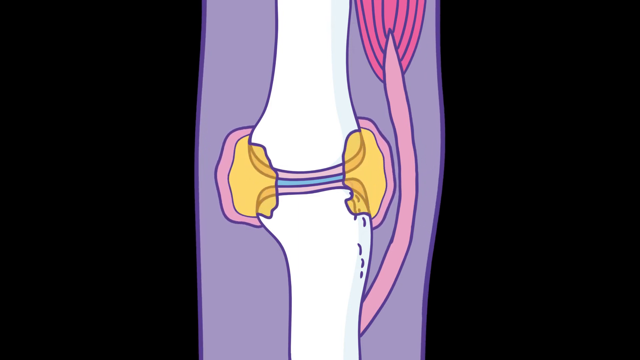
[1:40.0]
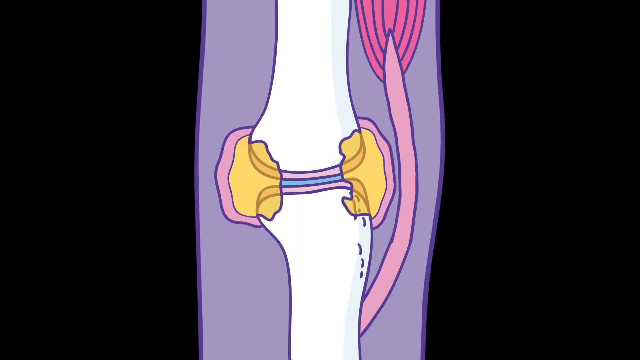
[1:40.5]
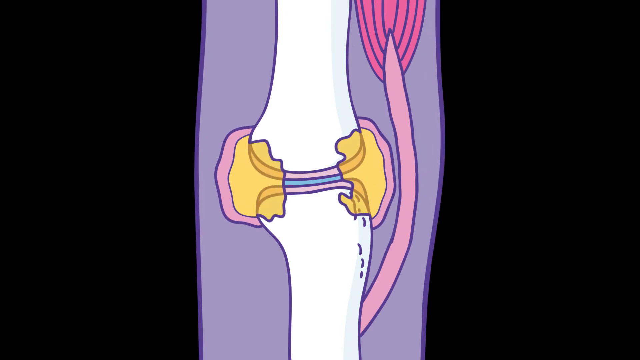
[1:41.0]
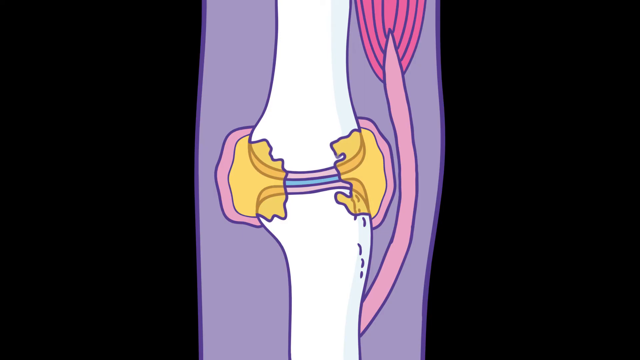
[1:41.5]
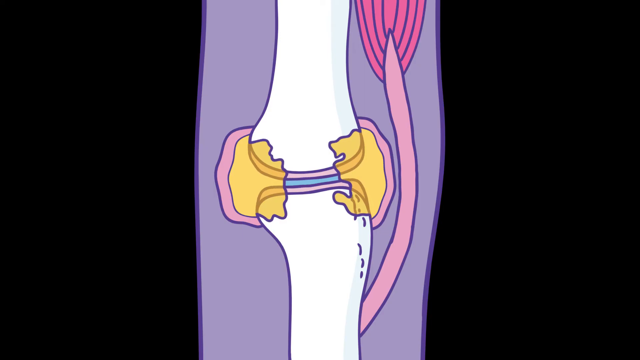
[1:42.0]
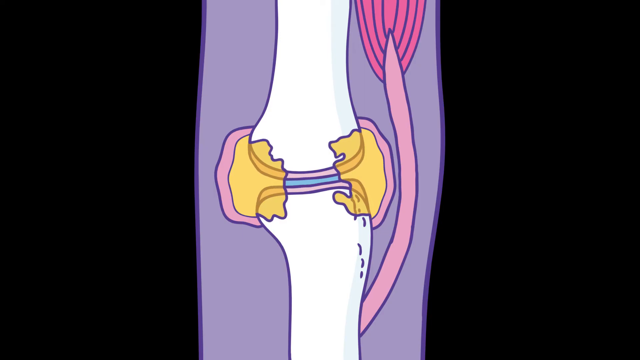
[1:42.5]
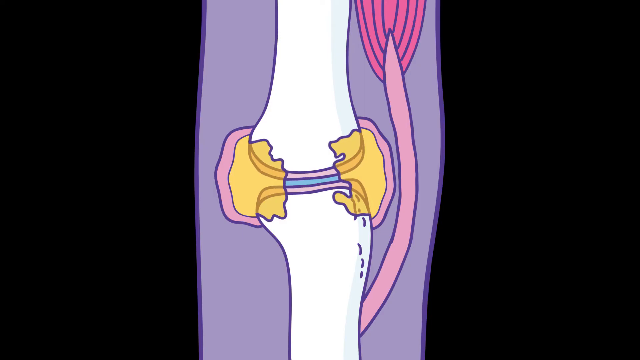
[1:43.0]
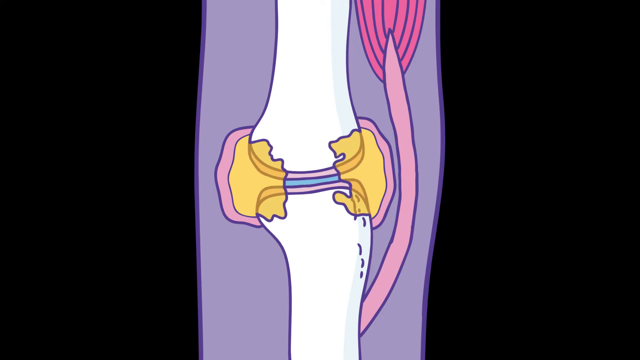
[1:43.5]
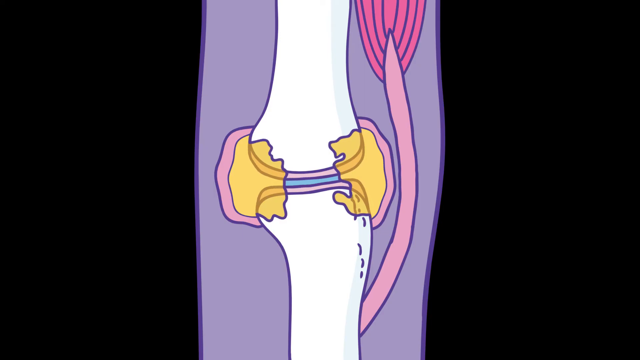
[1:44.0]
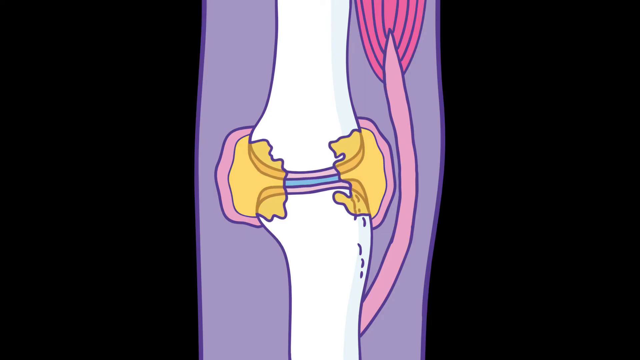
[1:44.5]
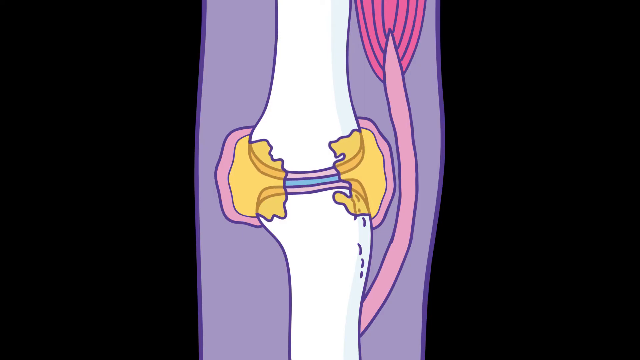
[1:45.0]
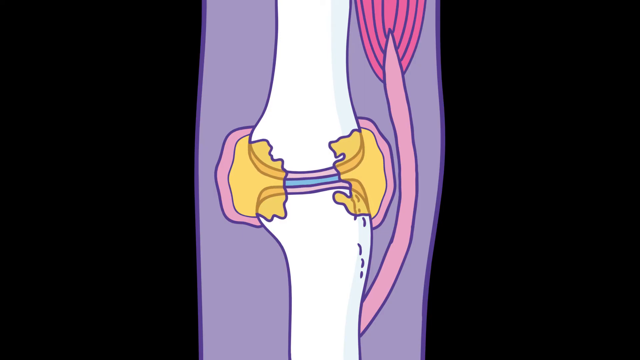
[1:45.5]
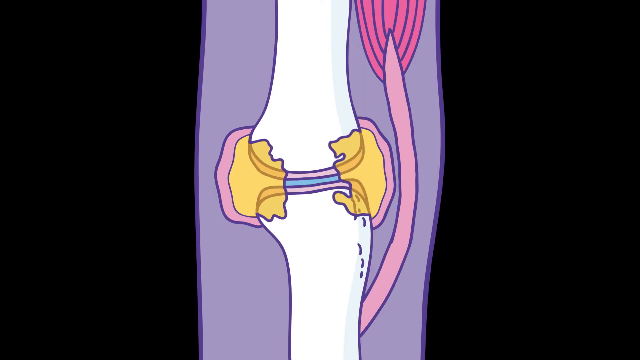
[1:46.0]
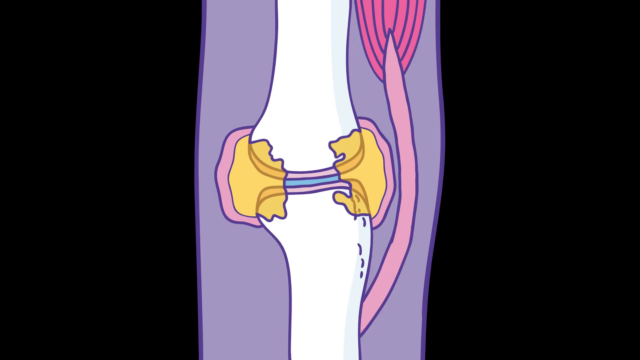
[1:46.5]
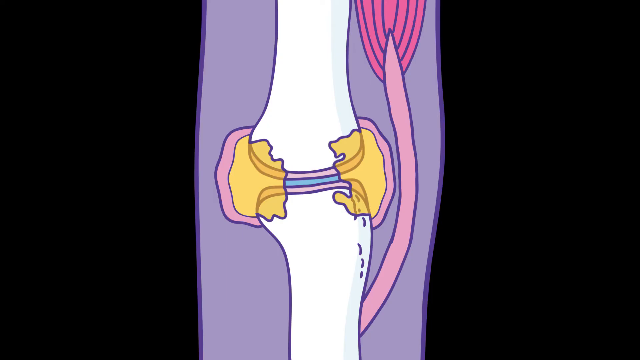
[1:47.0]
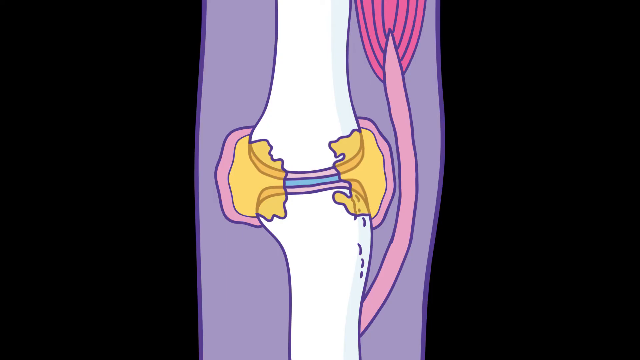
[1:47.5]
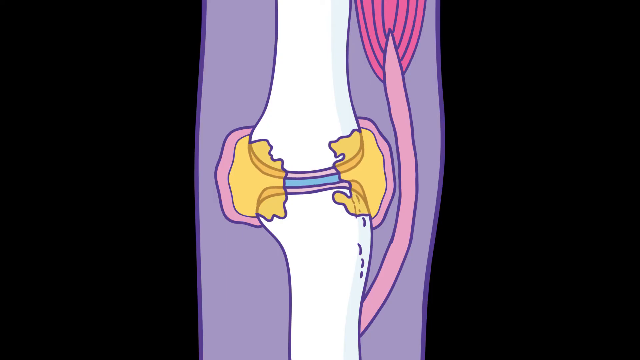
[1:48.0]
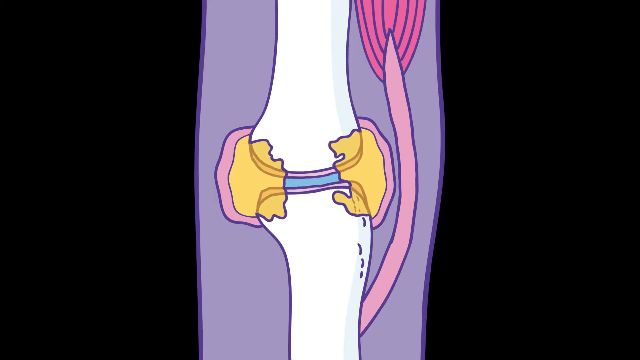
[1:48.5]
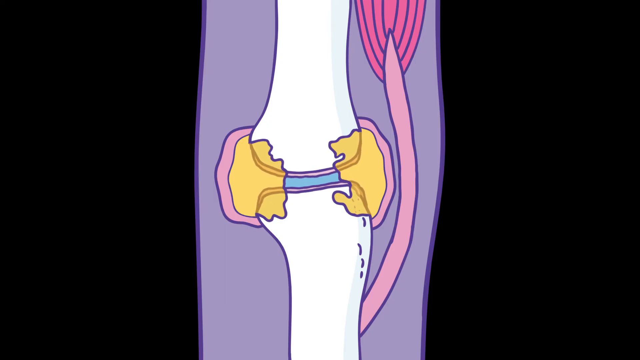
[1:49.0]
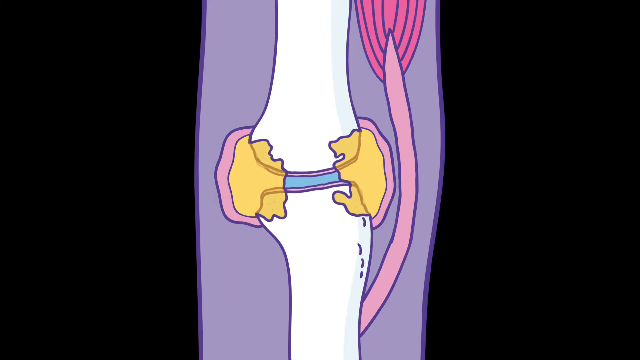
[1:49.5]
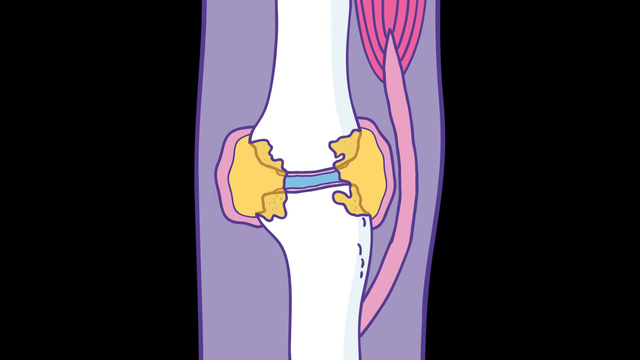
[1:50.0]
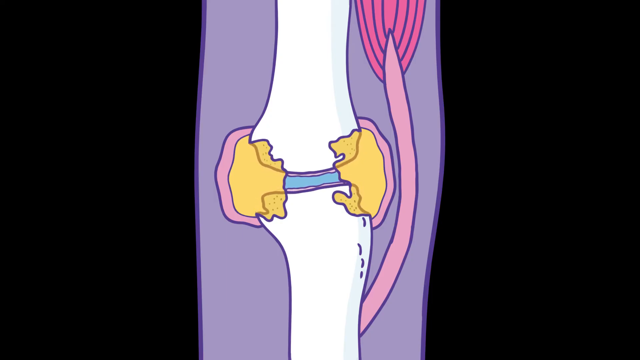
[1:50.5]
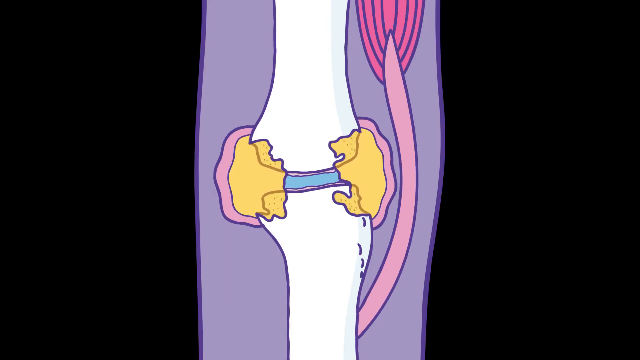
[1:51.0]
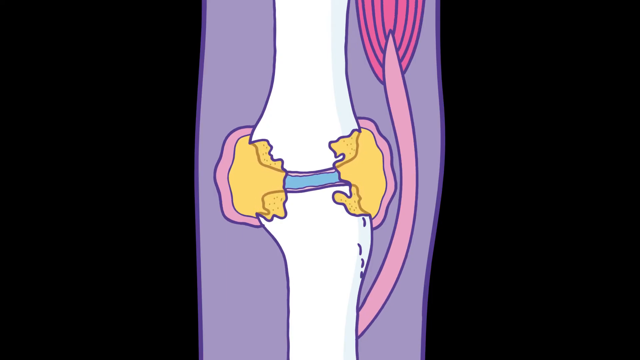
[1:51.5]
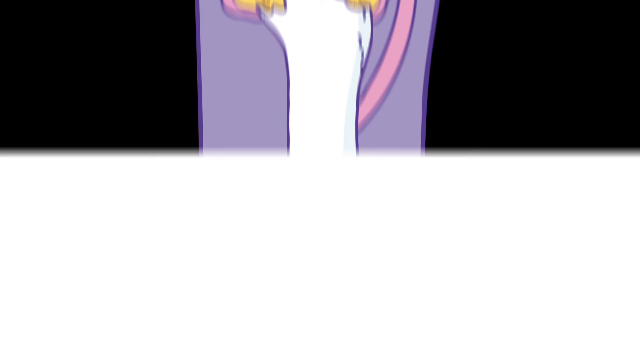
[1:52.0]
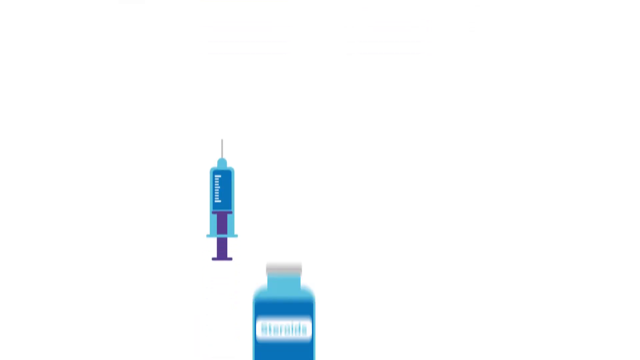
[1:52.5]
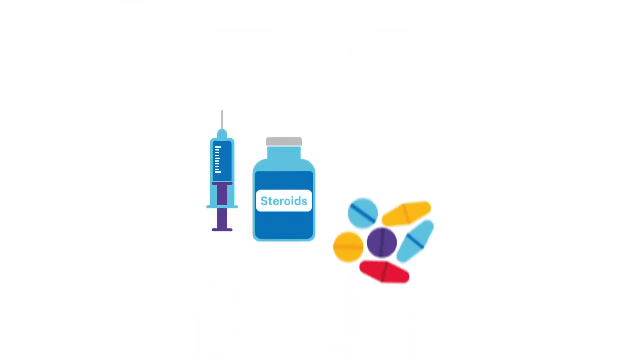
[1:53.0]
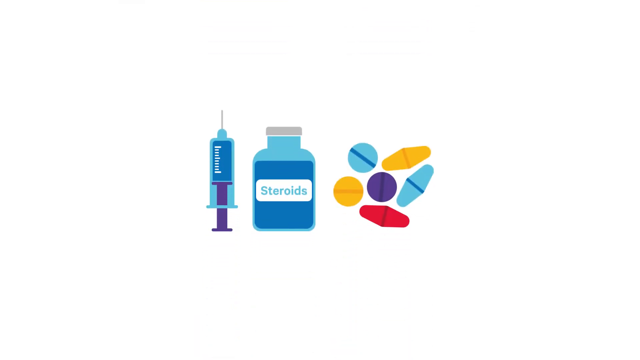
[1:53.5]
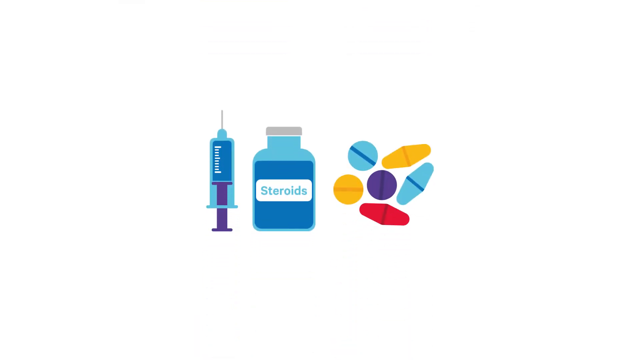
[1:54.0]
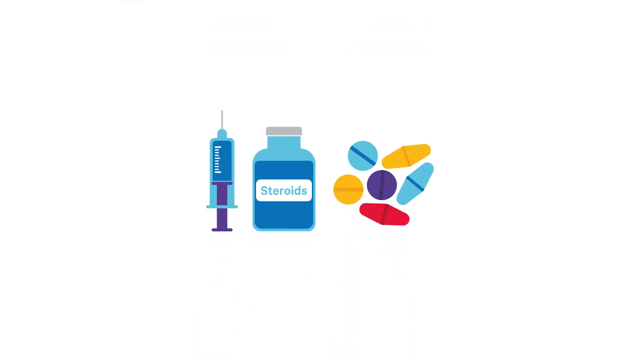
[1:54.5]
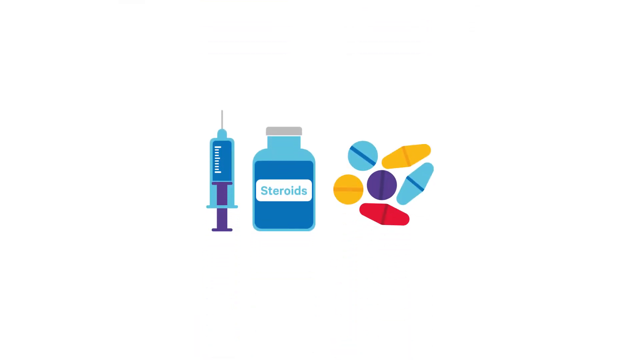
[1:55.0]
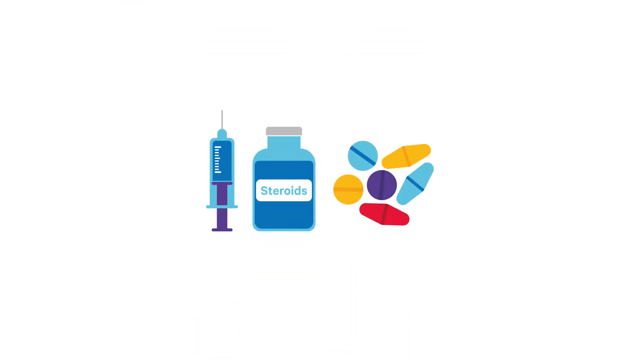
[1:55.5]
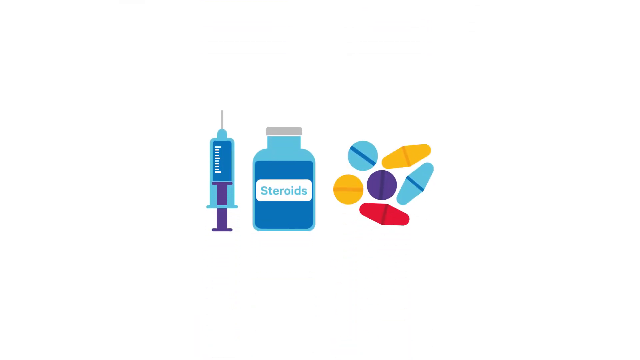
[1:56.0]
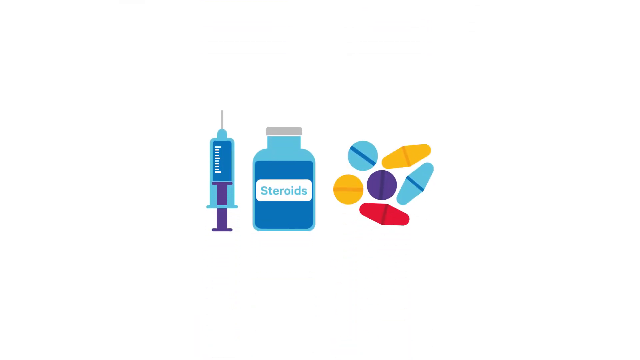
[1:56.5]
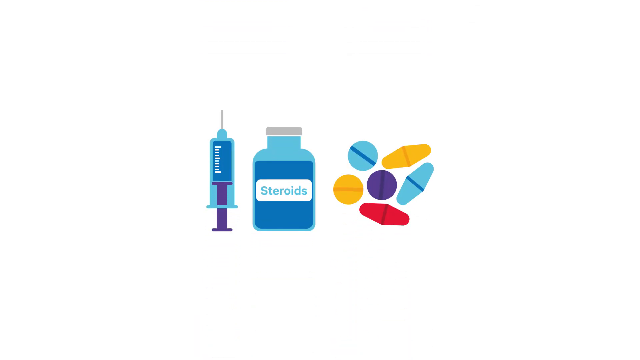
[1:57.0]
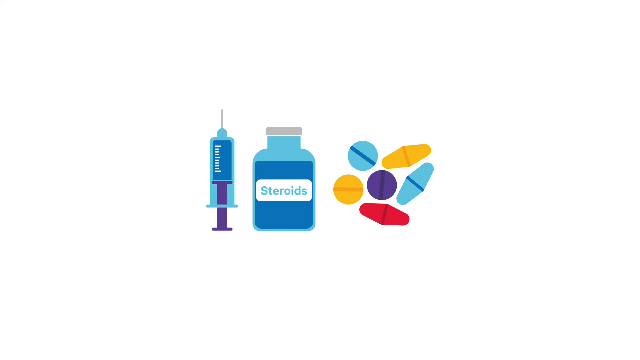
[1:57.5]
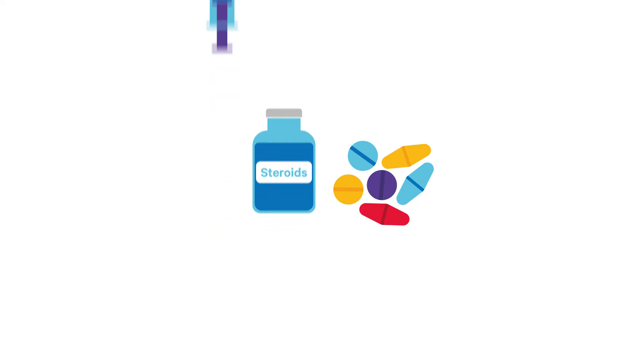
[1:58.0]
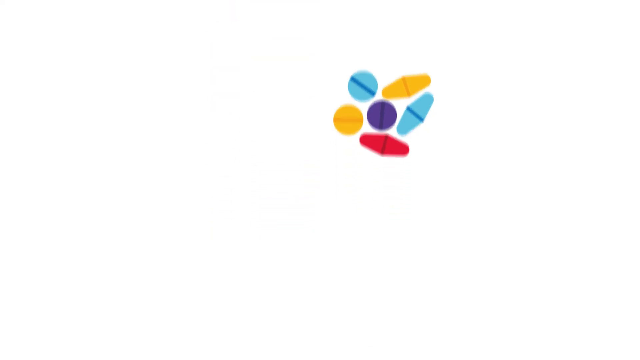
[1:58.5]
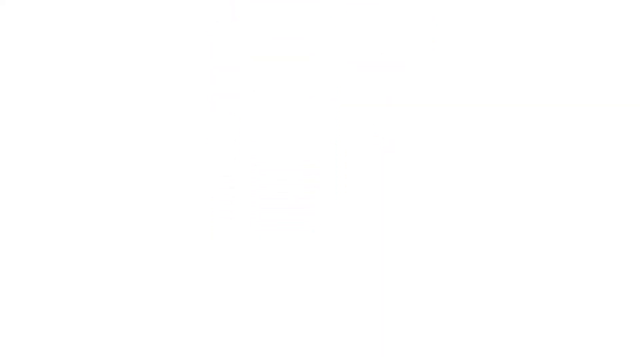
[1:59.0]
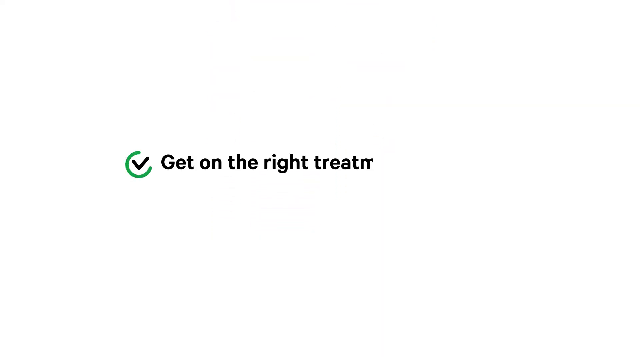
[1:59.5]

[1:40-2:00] The knee joint animation continues in purple, yellow, blue, white and red, with yellow infiltrating the bone and tendons, possibly representing the inflammation of arthritis. The view then switches to a syringe, a steroid bottle and possibly pills in blue, yellow, purple and red, apparently ways to treat the problem. Toward the end, text reading "get on the right treatment" appears, and the animation returns to the knee joint with the swelling and the steroids.